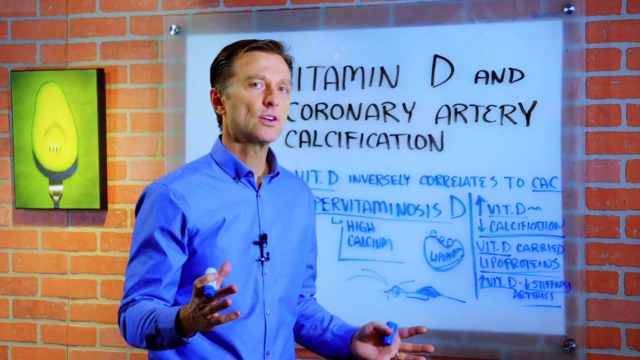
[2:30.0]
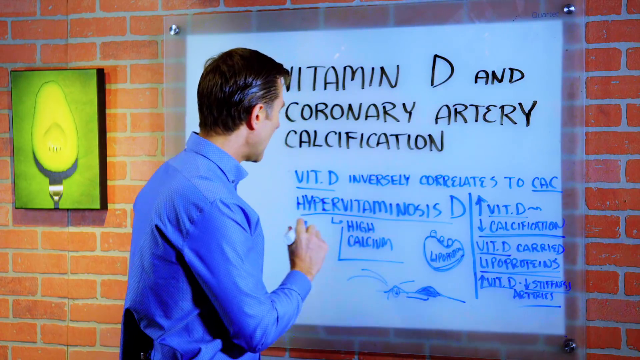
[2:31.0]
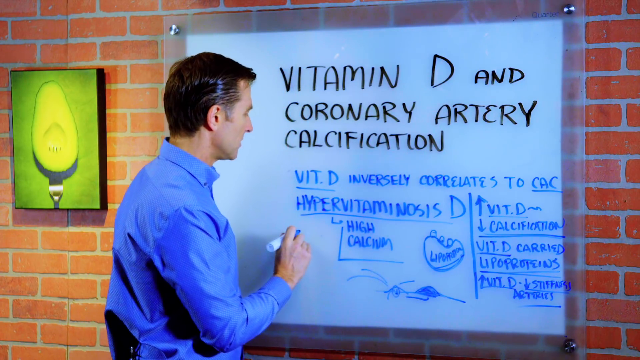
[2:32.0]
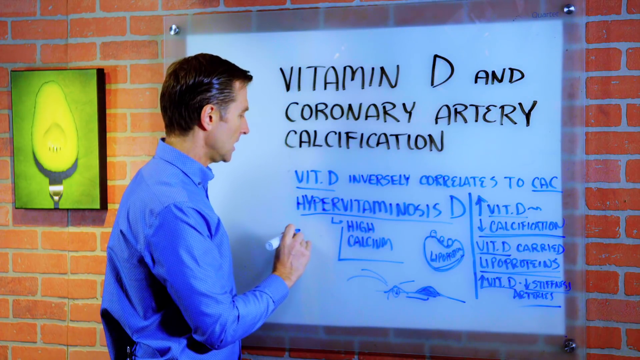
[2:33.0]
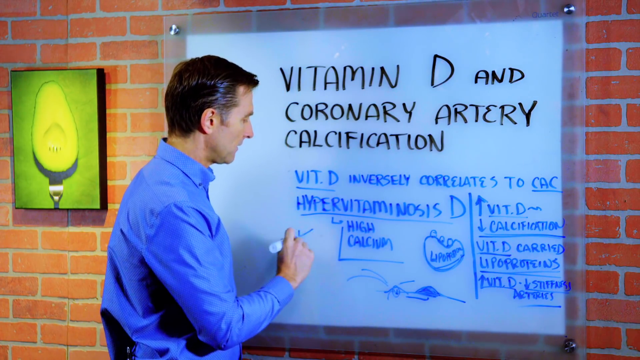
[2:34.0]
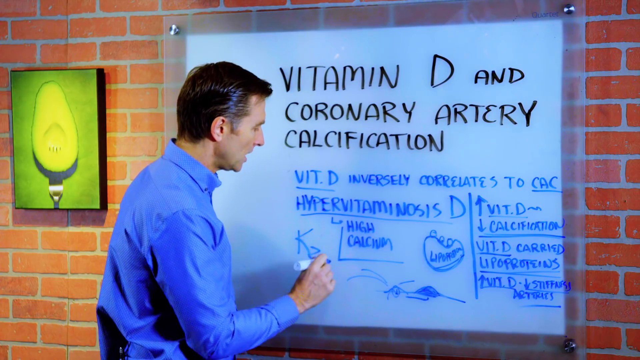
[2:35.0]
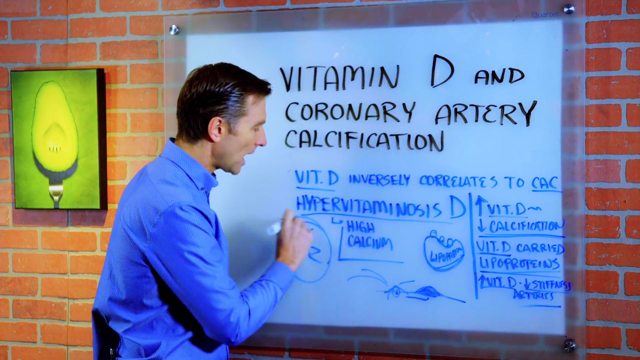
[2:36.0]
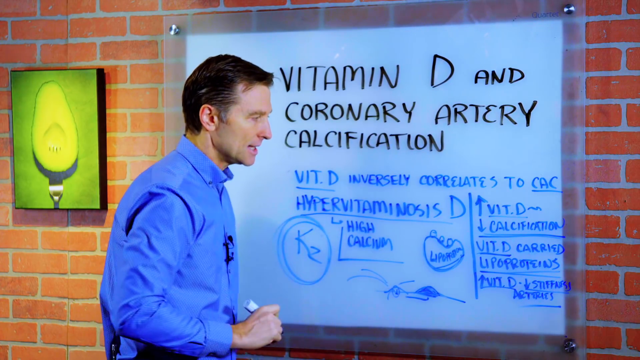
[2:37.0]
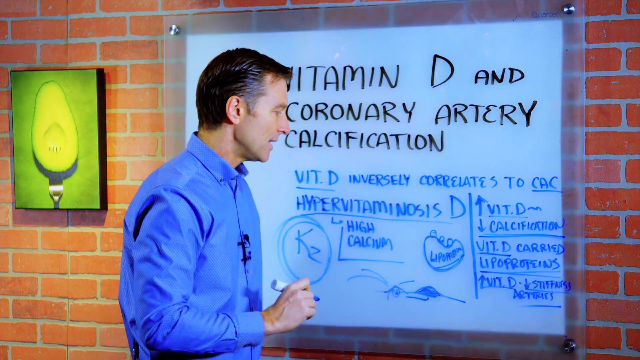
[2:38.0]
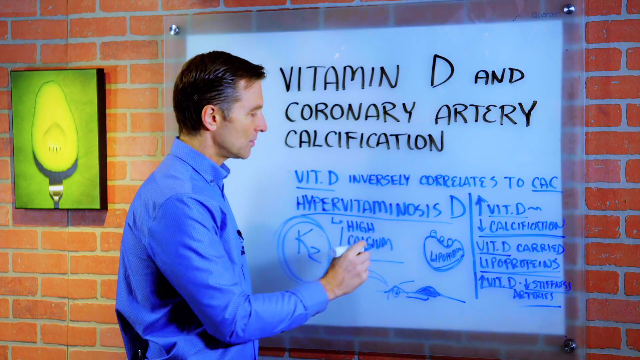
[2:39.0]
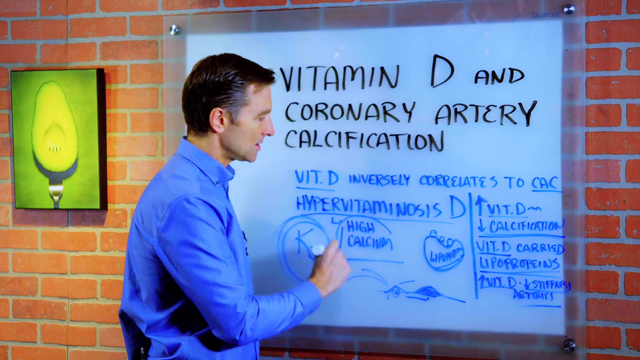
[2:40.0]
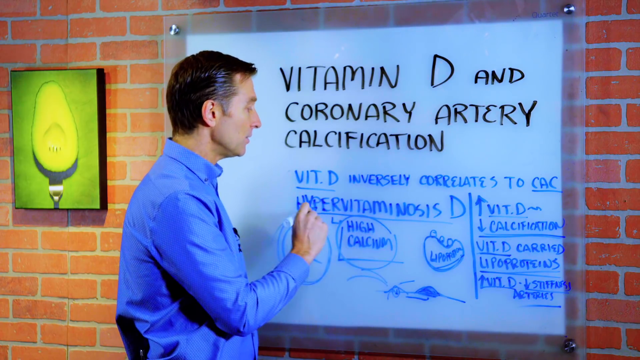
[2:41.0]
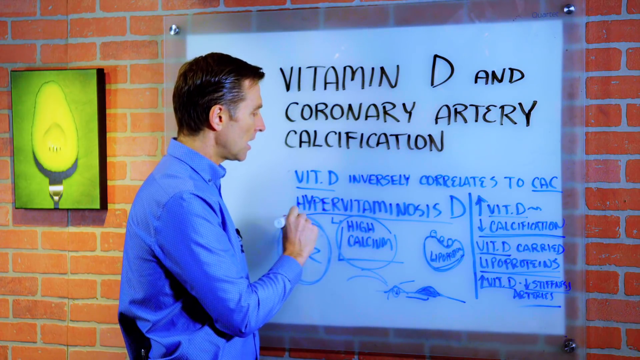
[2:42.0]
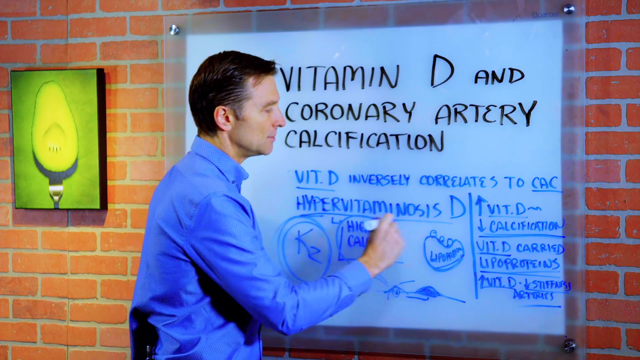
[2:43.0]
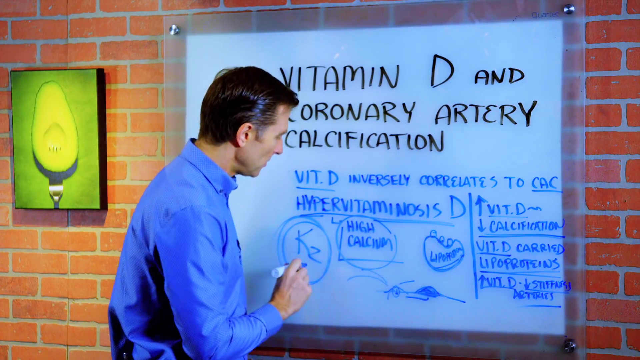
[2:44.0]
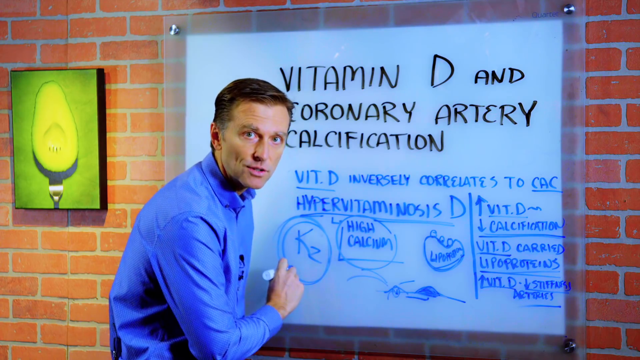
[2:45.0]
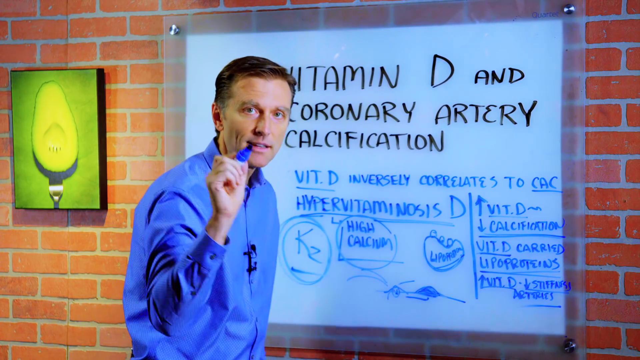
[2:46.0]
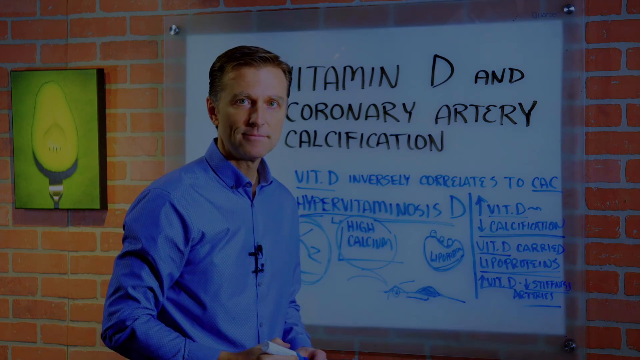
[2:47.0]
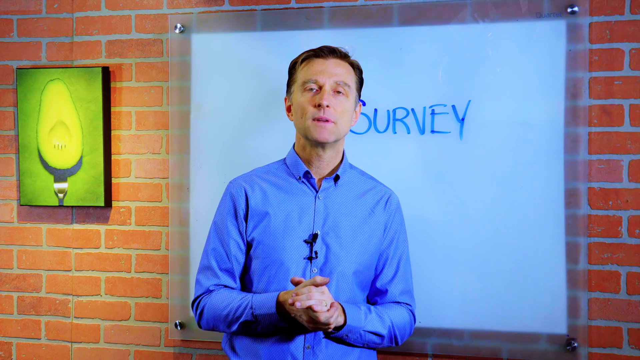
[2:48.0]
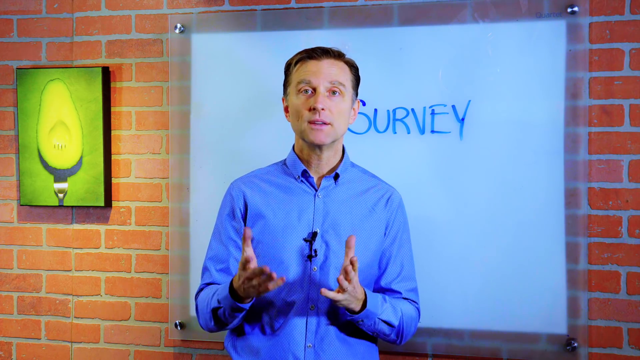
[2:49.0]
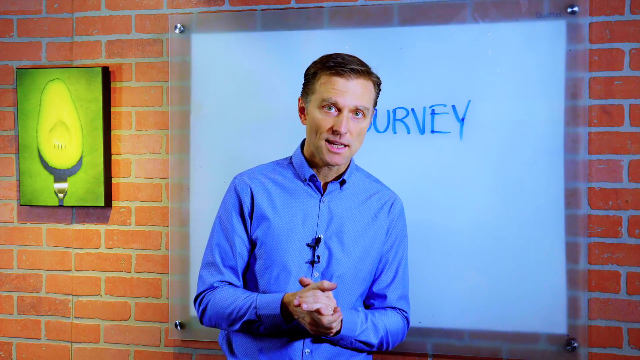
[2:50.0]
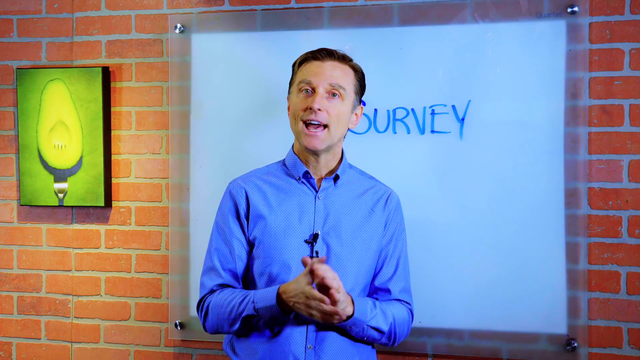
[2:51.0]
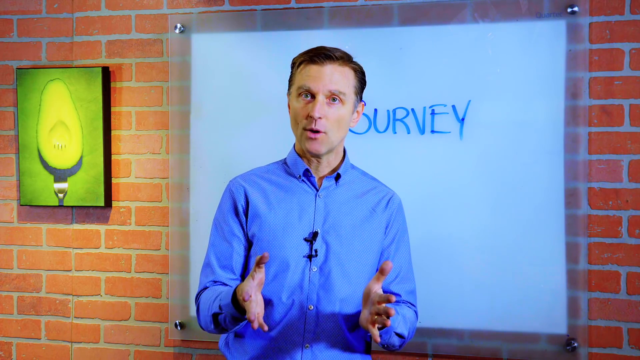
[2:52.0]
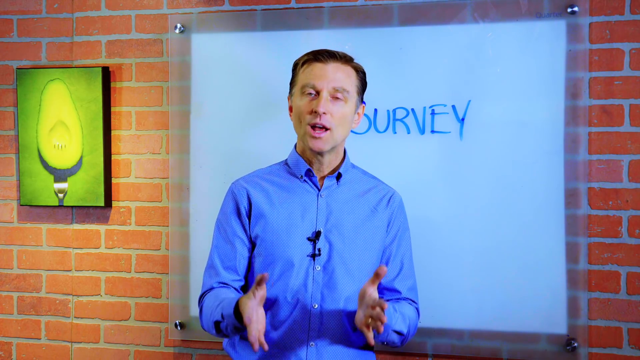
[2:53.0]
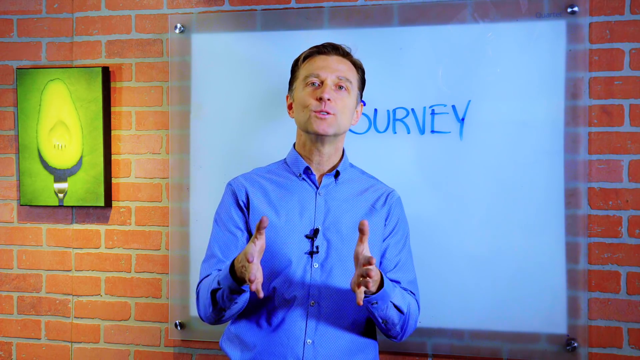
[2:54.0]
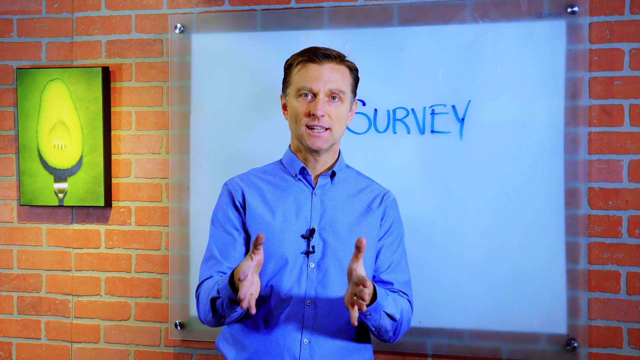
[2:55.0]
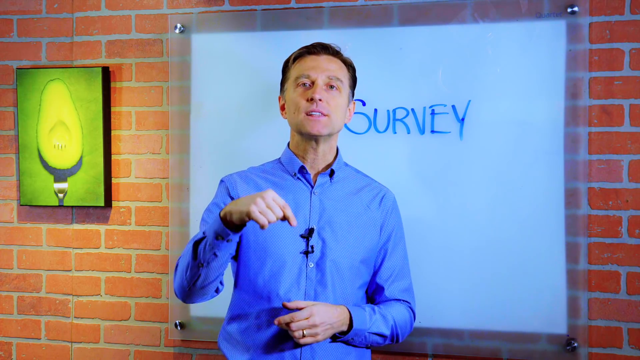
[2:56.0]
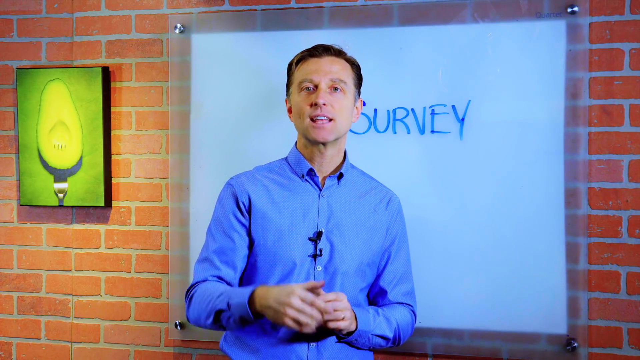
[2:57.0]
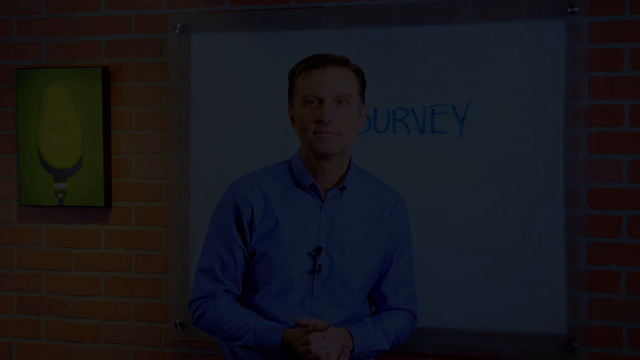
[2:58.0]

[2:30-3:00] Under "hypervitaminosis," the man writes "kz," with a capital K and lowercase z, and circles it twice for emphasis while talking. He circles "high calcium" to the right, underlines "hypervitaminosis" in different spots, points, and underlines "kz" again. He turns and talks to the camera as the video fades to black. Then the board is white: everything has been erased and "survey" is written, centered behind him. He holds his hands together, clasping them as he speaks, then holds his hands out toward the camera with fingers pointing and thumbs up, both hands moving in unison and shaking up and down as he talks. The shadow of his arms and fingers is visible on his shirt. He points down with his right index finger, maybe to prompt viewers to subscribe, though nothing is there. Finally he clasps his hands, left over right, as the screen goes to black.